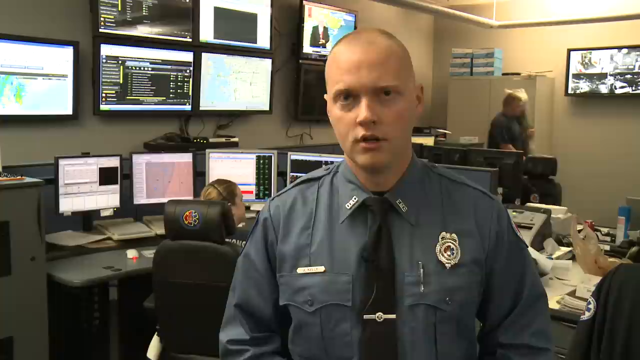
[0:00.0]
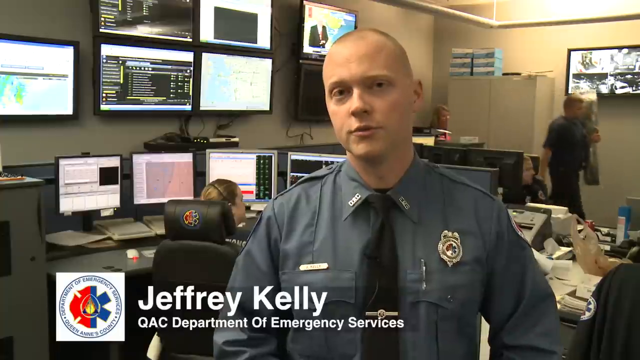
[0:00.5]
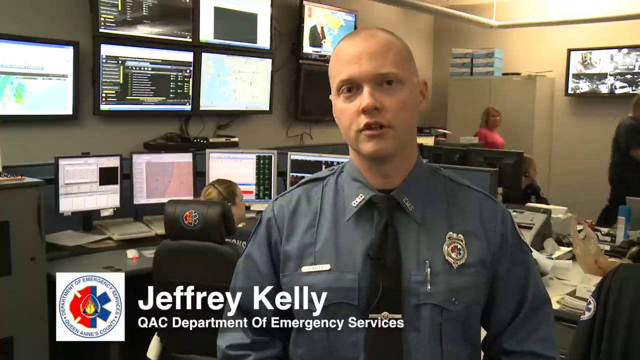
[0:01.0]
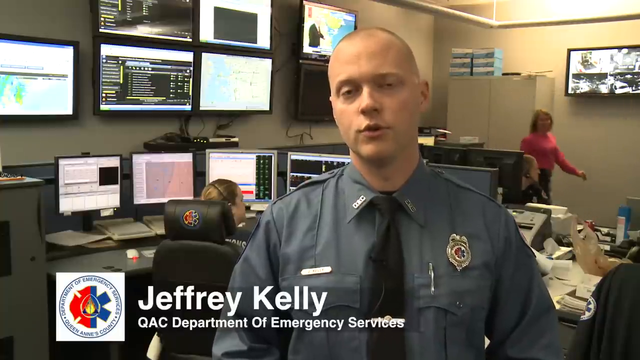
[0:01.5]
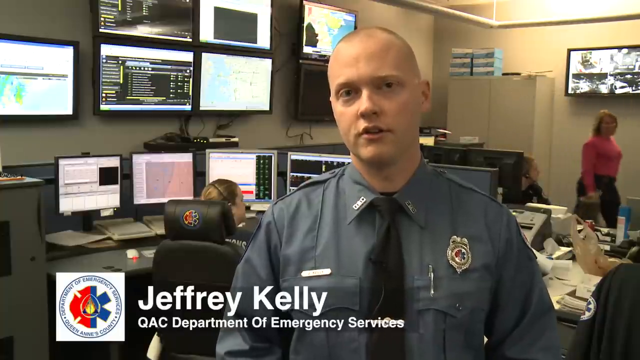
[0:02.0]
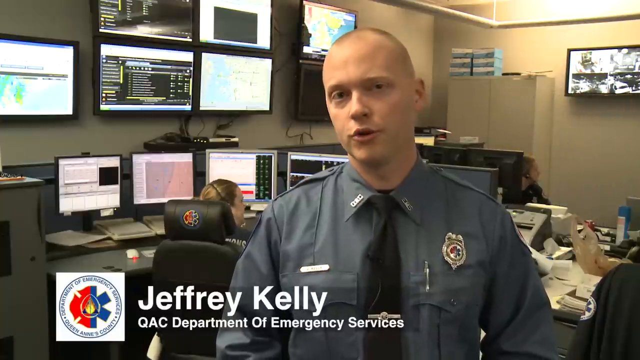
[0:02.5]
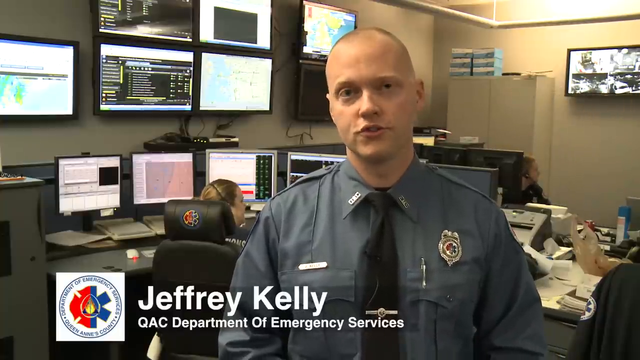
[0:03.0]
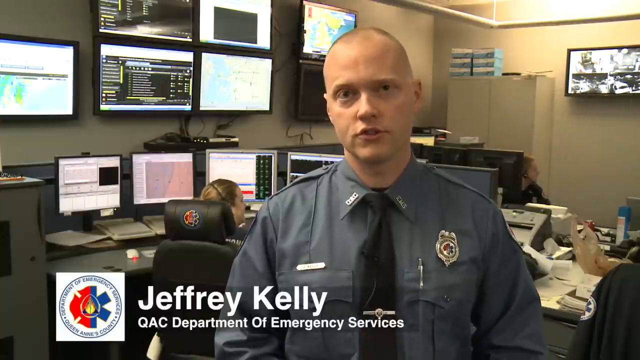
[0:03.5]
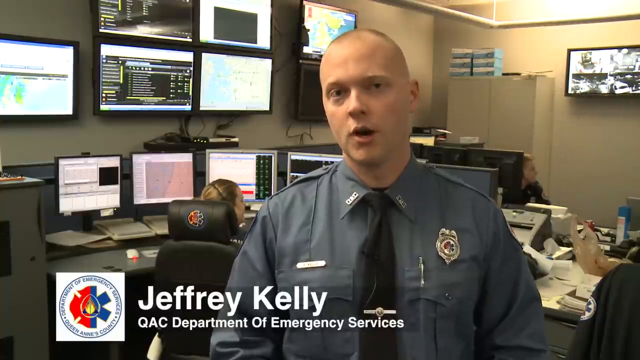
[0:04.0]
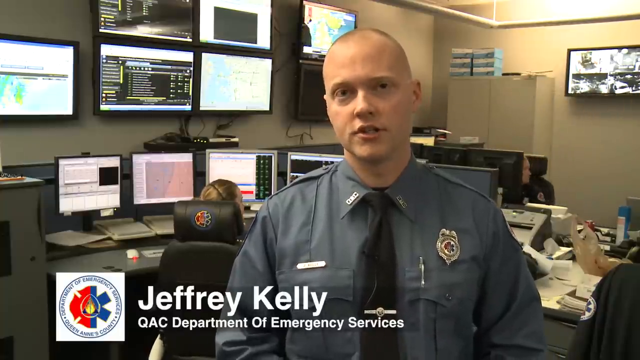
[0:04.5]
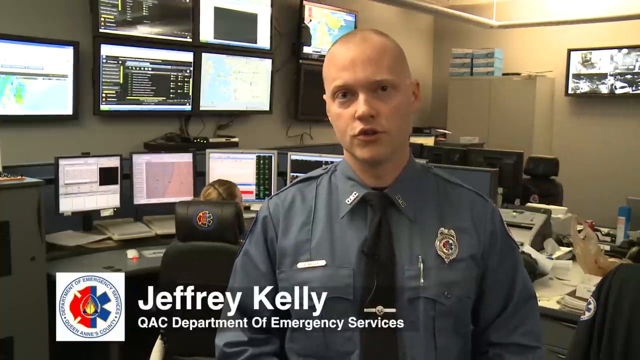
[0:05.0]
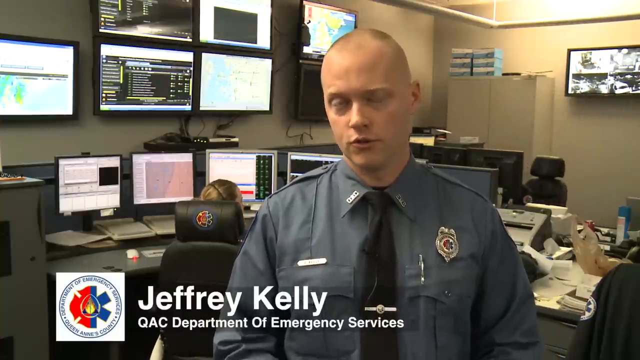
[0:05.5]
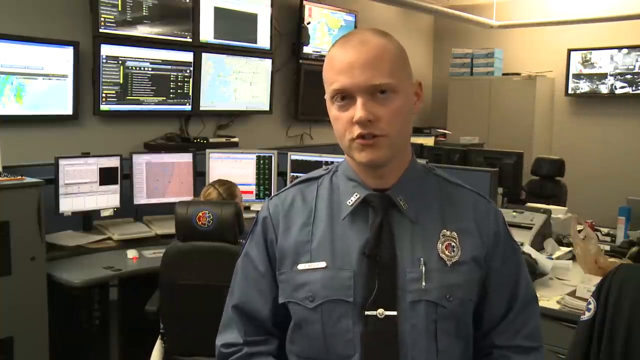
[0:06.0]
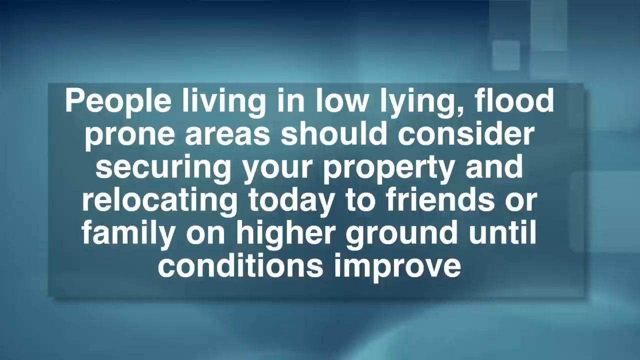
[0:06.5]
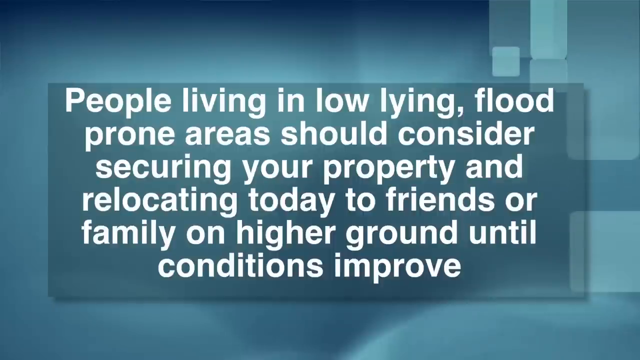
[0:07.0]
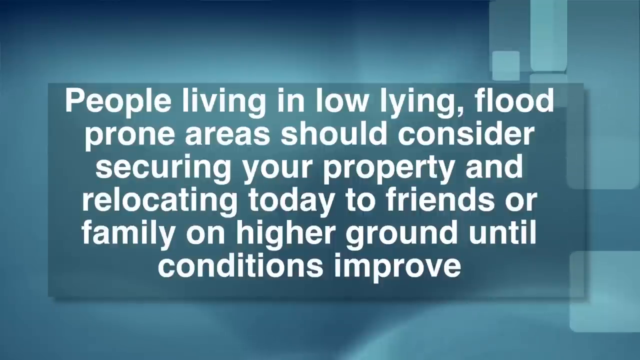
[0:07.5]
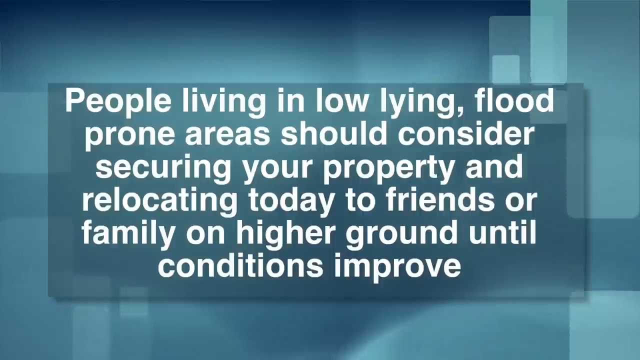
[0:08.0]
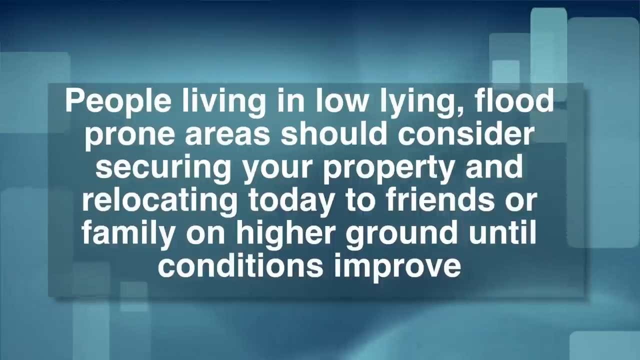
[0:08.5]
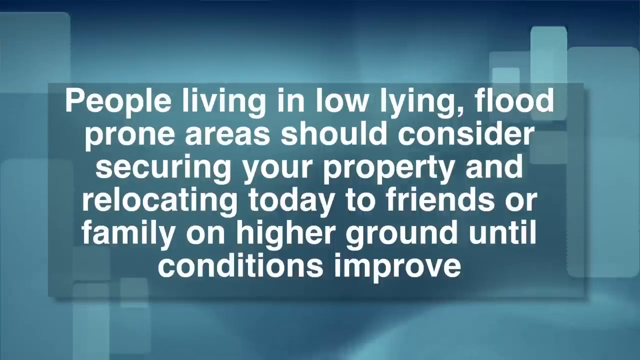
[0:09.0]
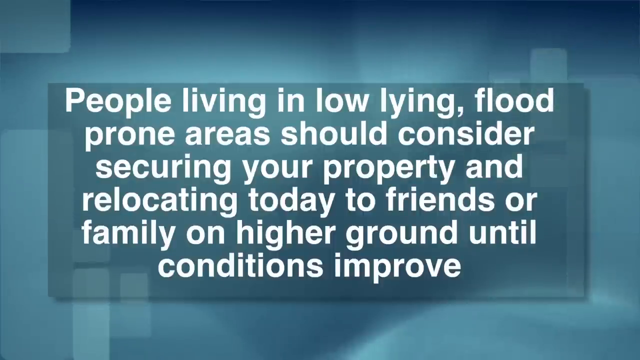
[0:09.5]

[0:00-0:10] An emergency services police officer gives an interview or report directly from the Department of Emergency Services. He wears a dark grey shirt with a badge on his left breast, and a lapel microphone is clipped to his tie. Behind him, various people sit at desks manning monitors and phones, taking calls; they work for the Queen Anne County Department of Emergency Services and take any emergency calls that come in. The officer's name, "Jeffrey Kelly", appears at the bottom of the screen. The screen then changes to text that reads "people living in low-lying, flood-prone areas should consider securing your property and relocating today to friends or family on higher ground until conditions improve."